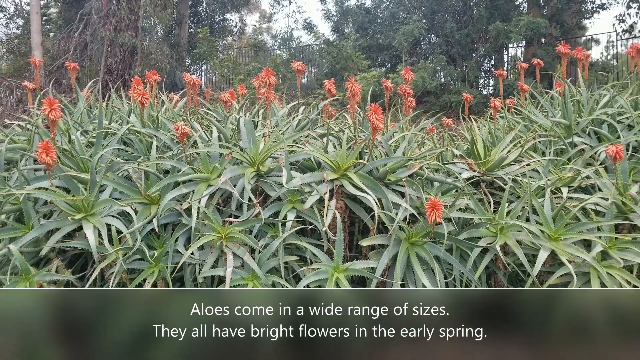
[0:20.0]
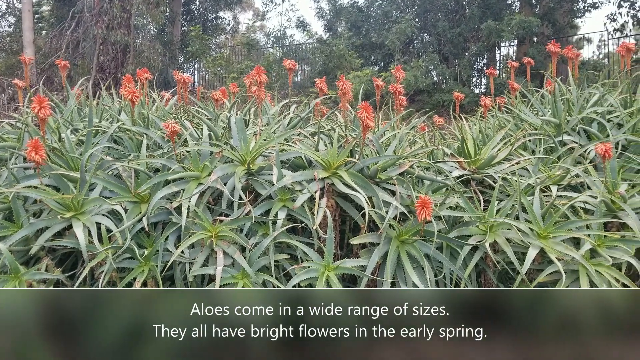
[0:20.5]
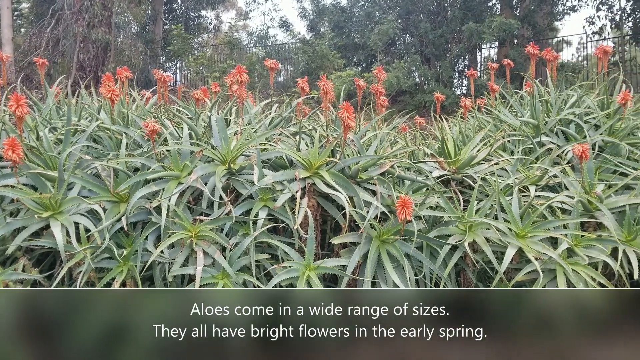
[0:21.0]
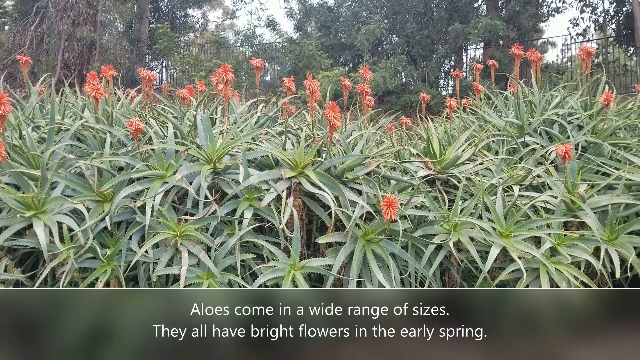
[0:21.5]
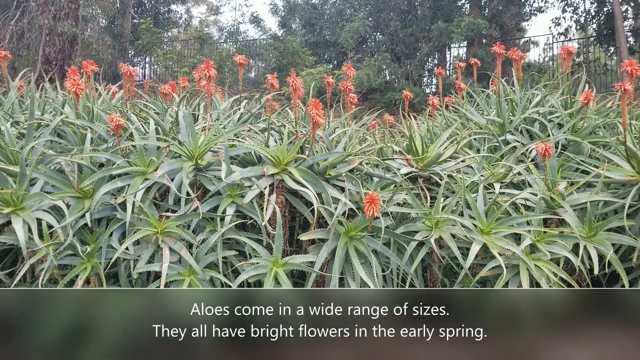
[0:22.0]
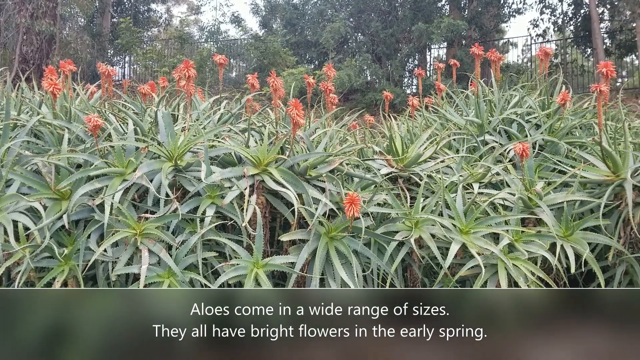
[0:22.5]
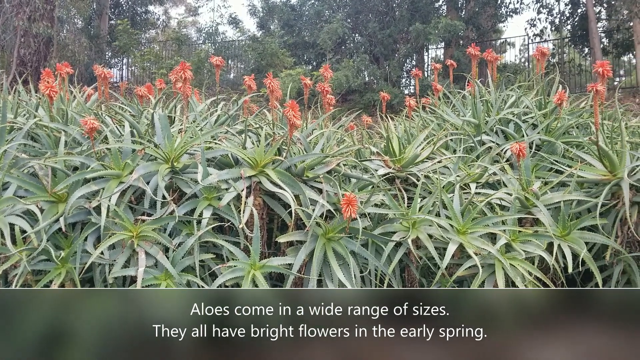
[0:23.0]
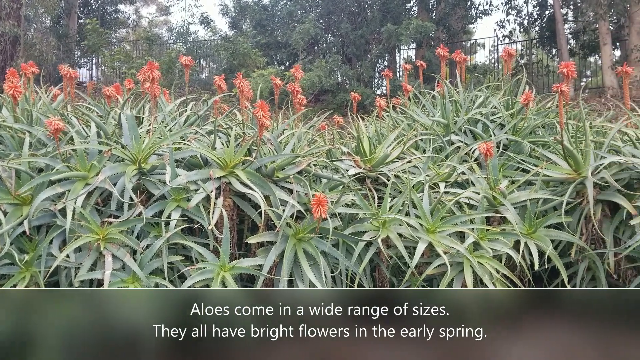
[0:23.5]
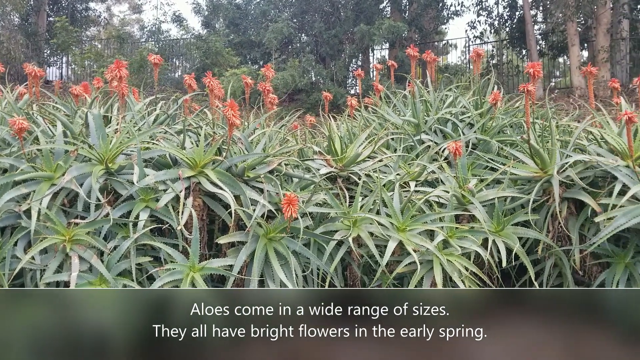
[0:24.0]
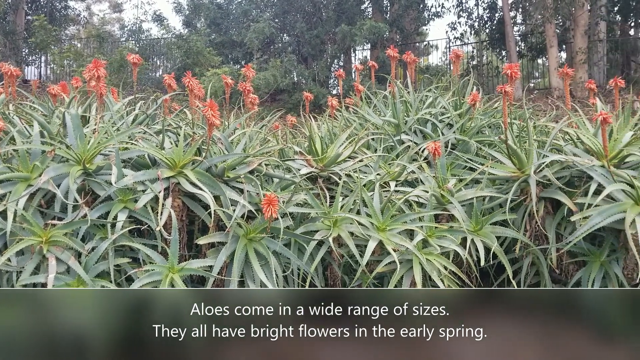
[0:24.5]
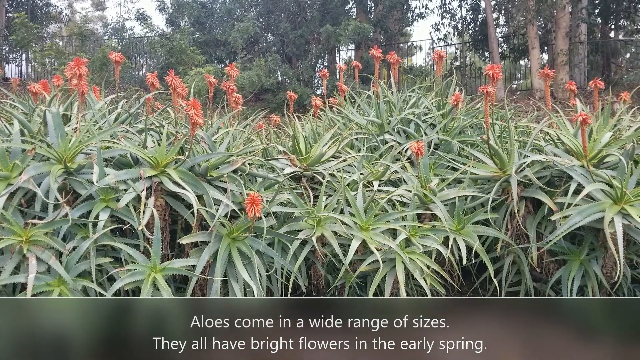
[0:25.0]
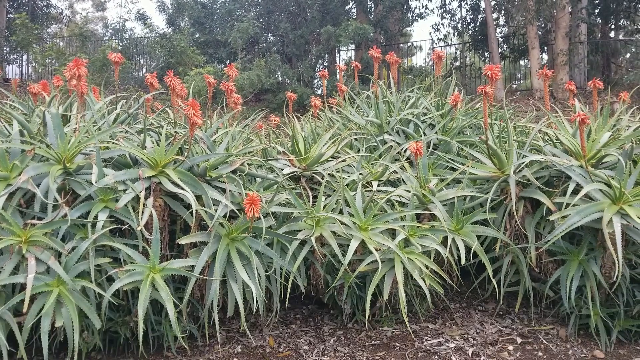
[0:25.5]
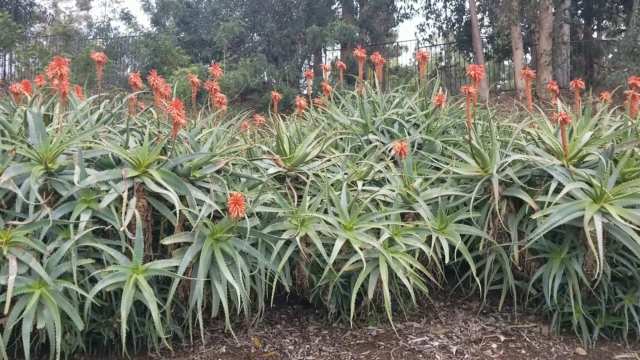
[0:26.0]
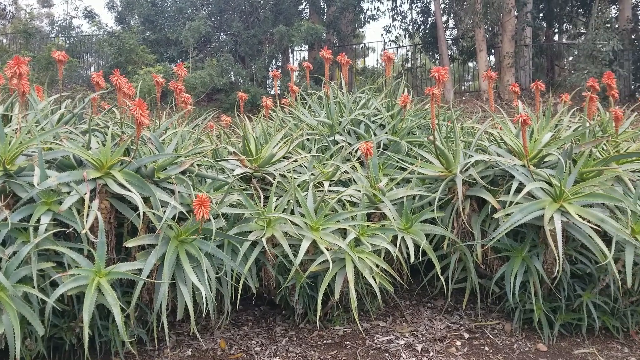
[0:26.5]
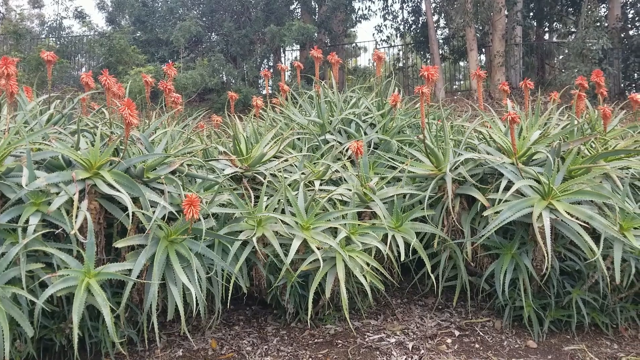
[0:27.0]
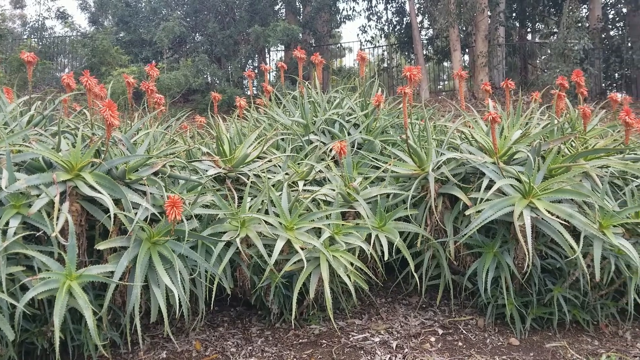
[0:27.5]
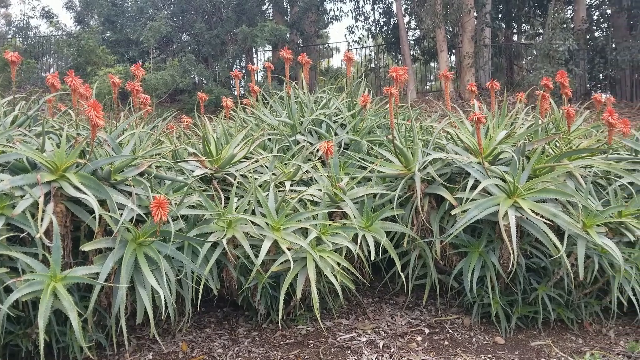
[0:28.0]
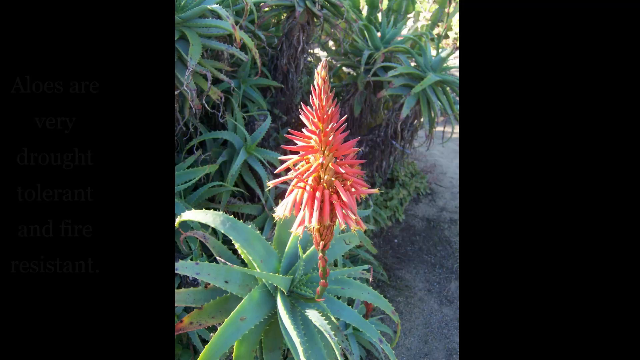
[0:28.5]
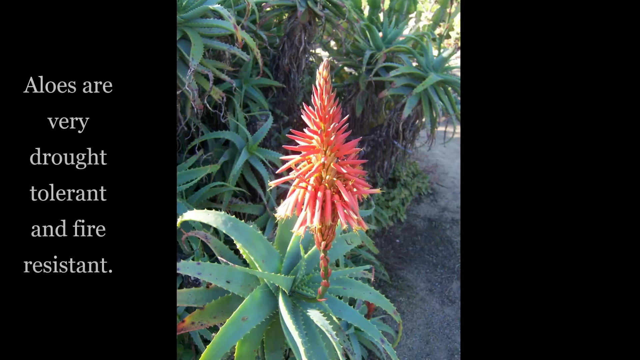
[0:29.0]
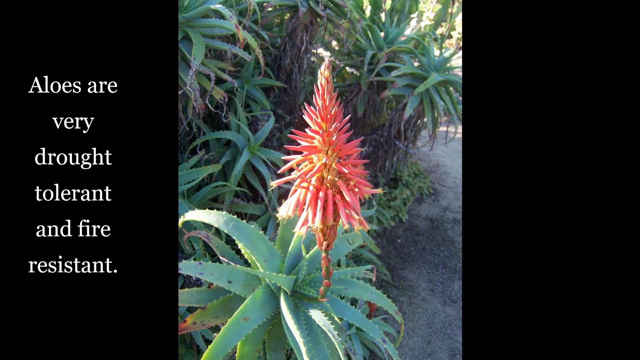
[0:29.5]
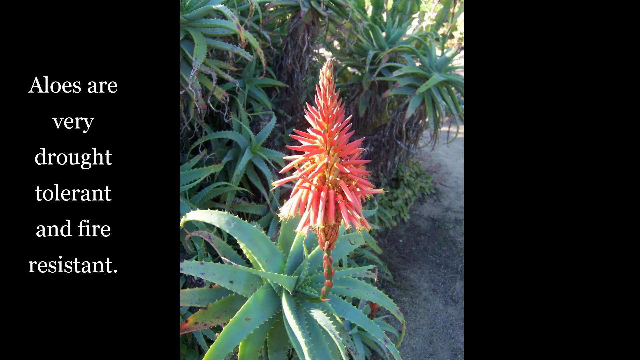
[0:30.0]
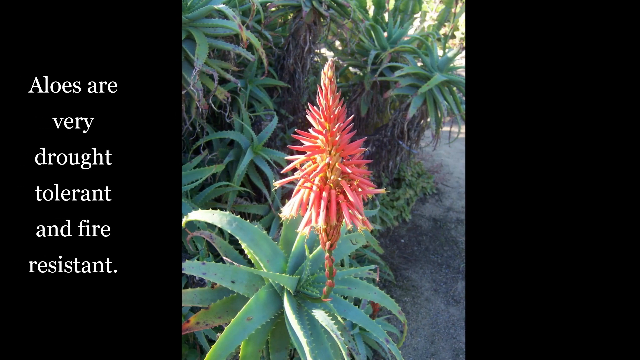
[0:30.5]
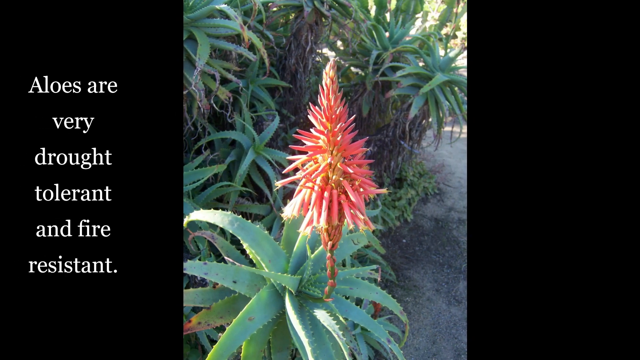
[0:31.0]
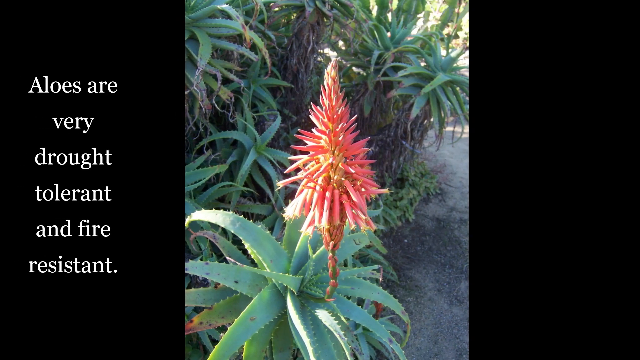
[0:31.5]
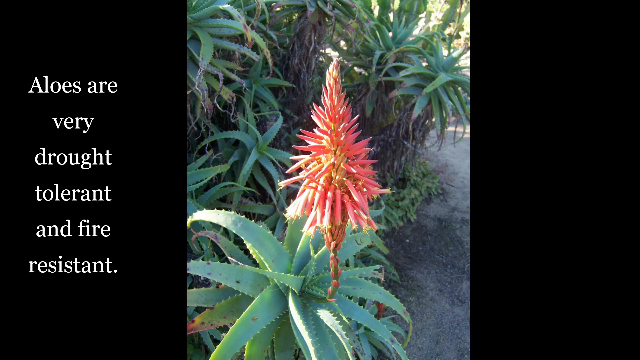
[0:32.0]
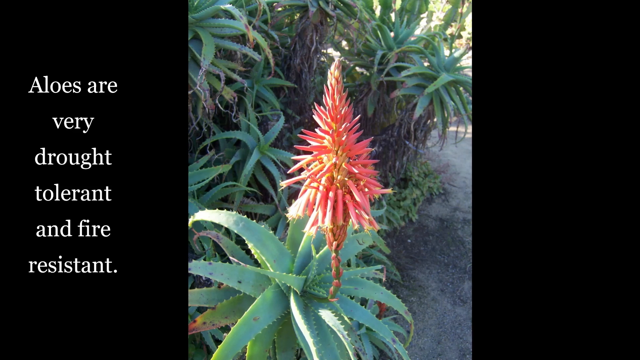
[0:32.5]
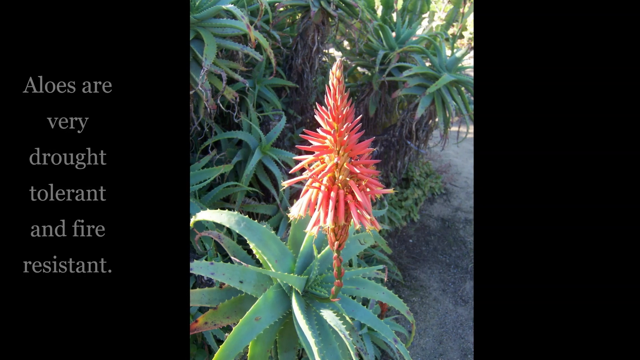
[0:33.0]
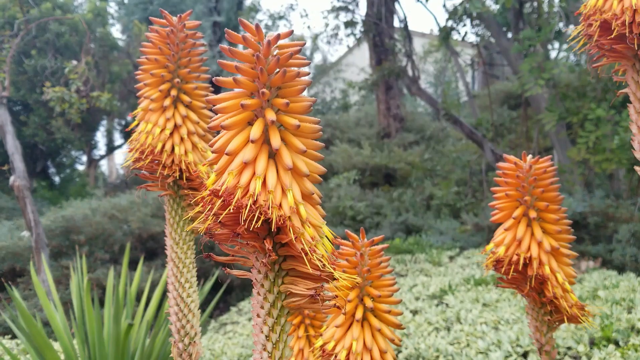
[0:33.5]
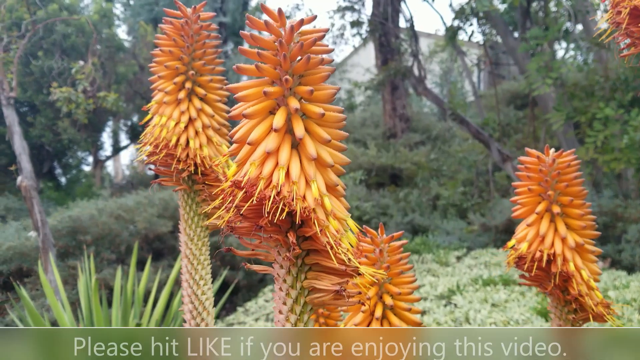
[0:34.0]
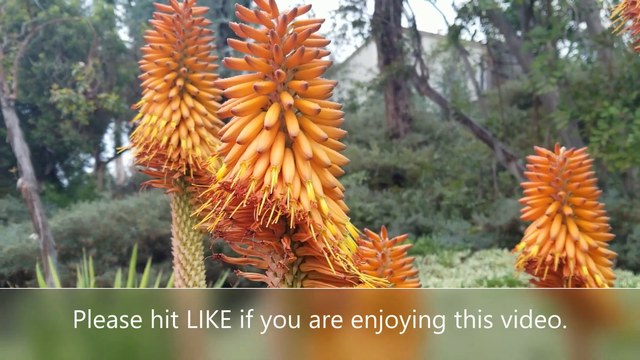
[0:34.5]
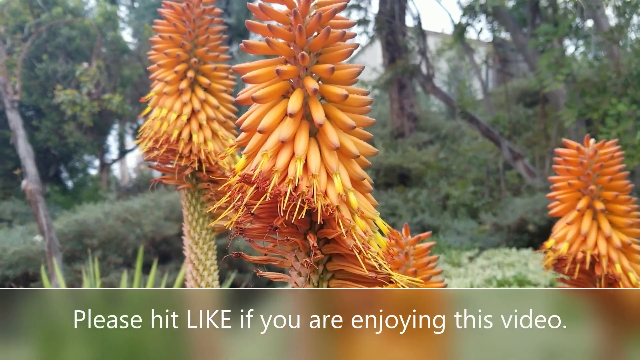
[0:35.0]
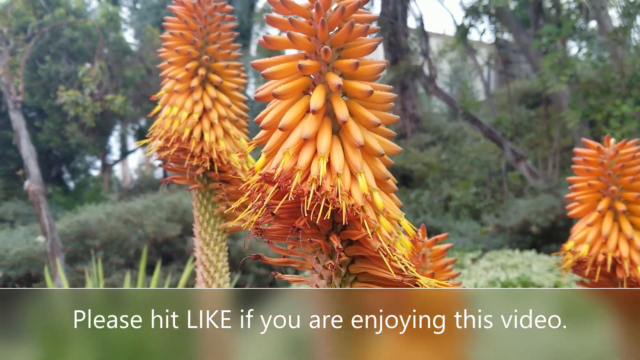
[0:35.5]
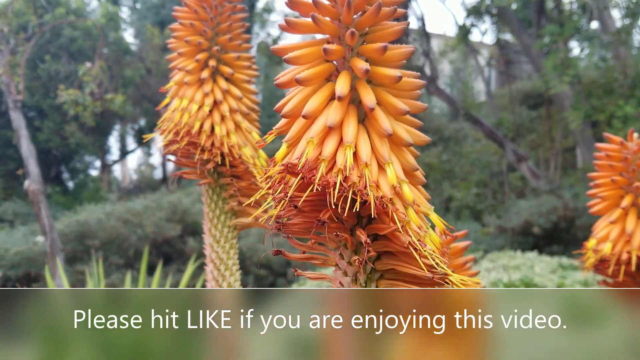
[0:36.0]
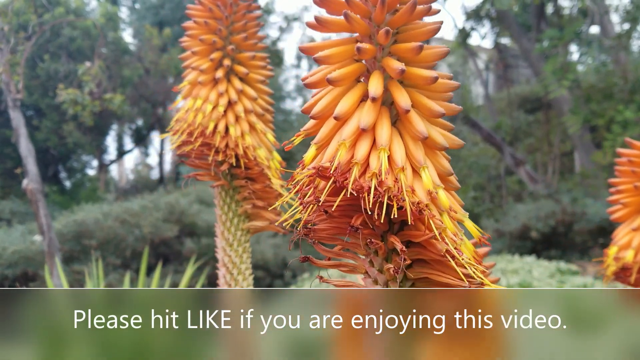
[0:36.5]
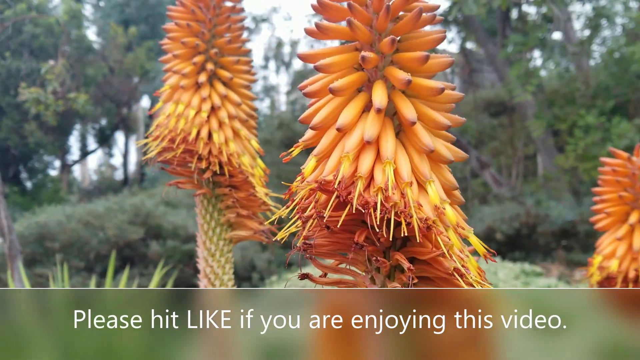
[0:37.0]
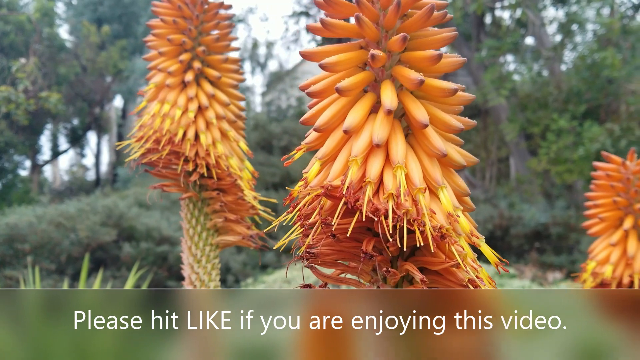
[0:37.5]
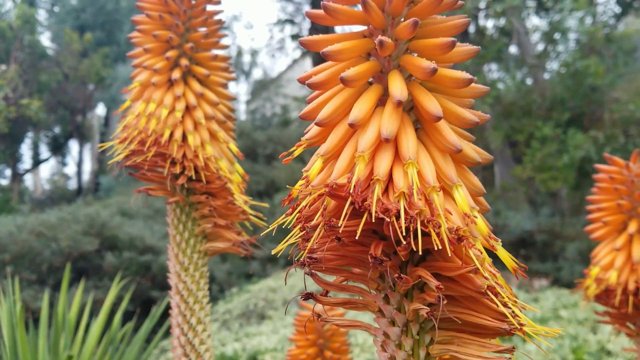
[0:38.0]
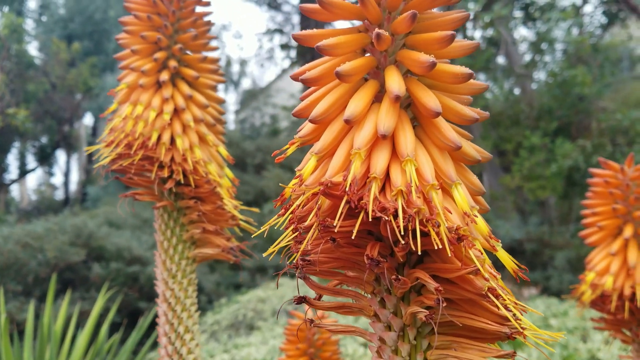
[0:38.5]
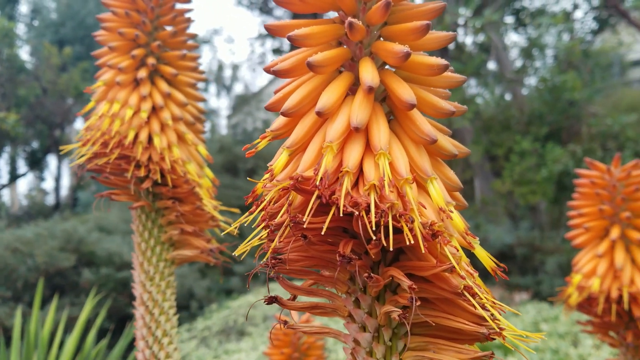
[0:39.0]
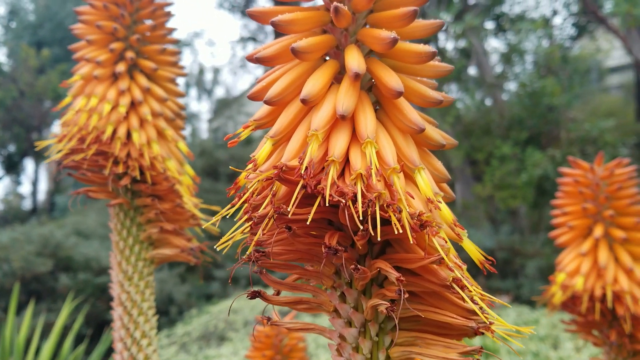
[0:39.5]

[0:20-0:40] A farther view shows a bunch of aloe plants with green leaves and orange flower buds at the top, with small text at the bottom of the screen reading "aloe comes in a wide range of sizes". The camera slowly pans to the right. The video cuts to a closer view of an aloe flower bud with some green aloe leaves in the background, with black bars on each side of the screen and text on the left reading "aloes are very drought tolerant and fire resistant". Next come orange-looking flowers, shown in a very close view, with the text "please like and subscribe". The video then goes back to the farther shot of the green aloe plants in the field.